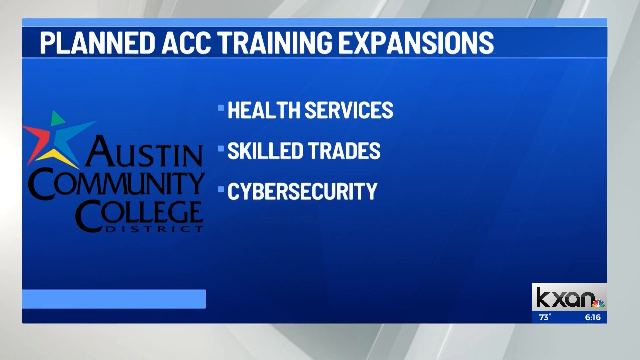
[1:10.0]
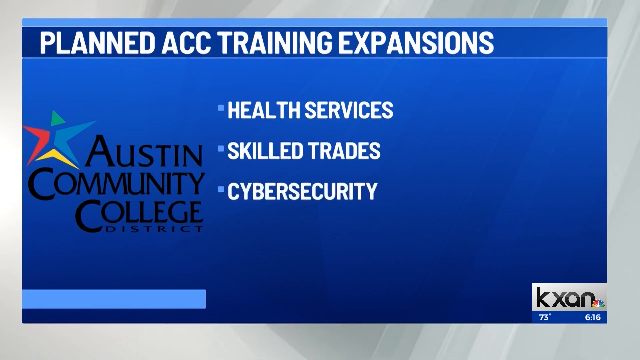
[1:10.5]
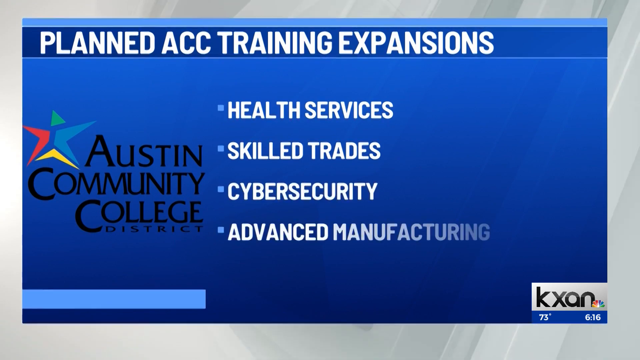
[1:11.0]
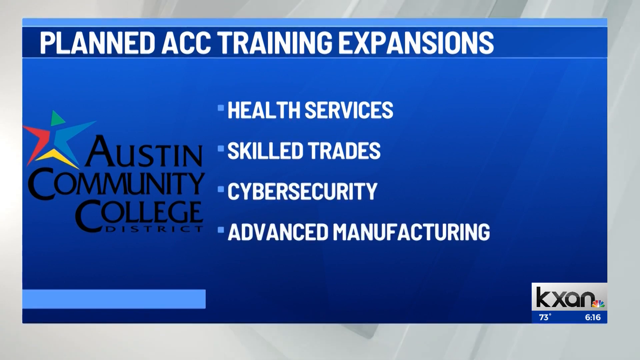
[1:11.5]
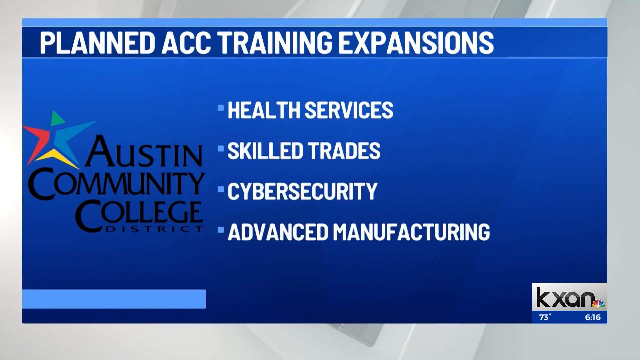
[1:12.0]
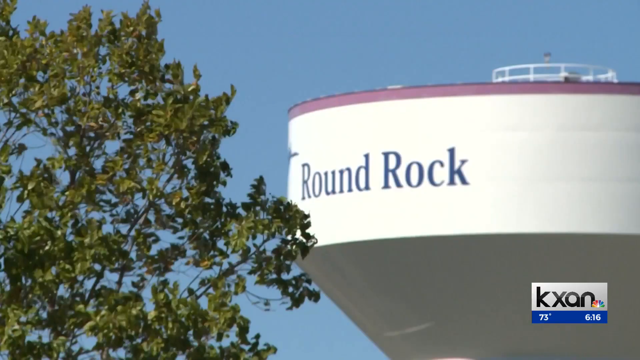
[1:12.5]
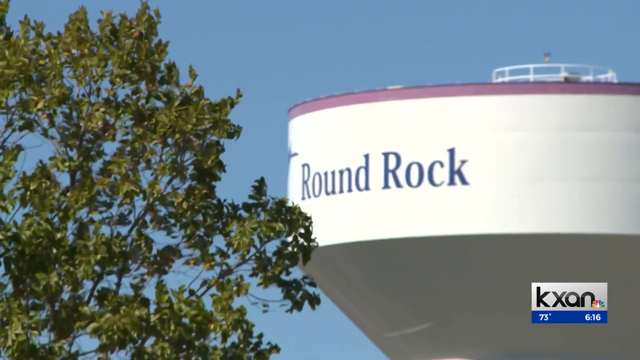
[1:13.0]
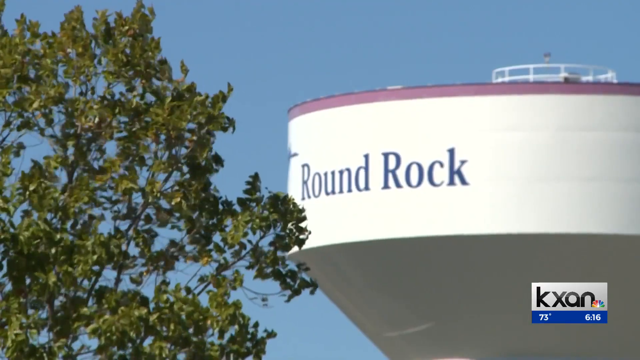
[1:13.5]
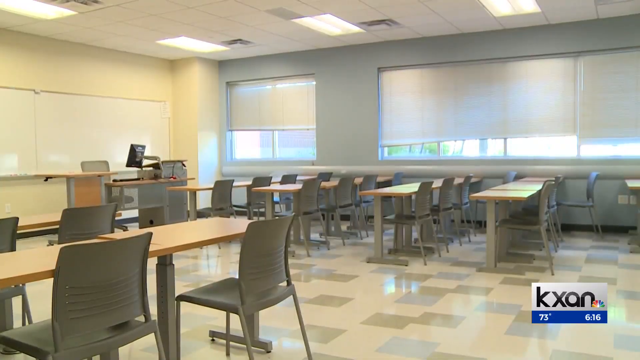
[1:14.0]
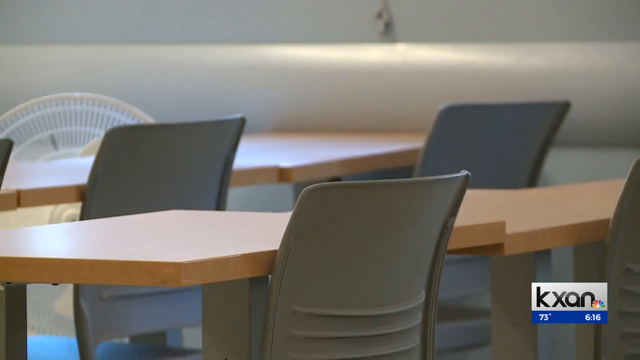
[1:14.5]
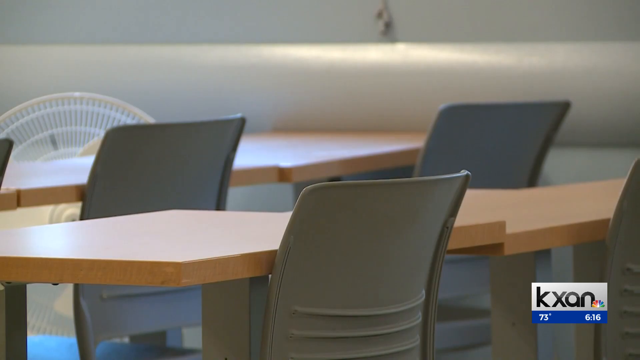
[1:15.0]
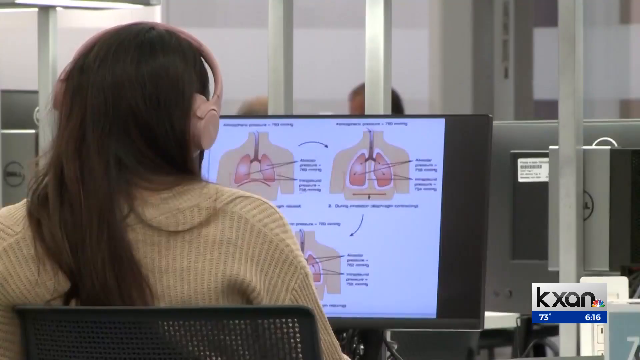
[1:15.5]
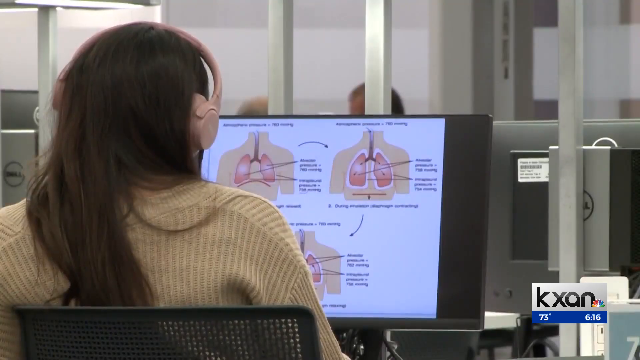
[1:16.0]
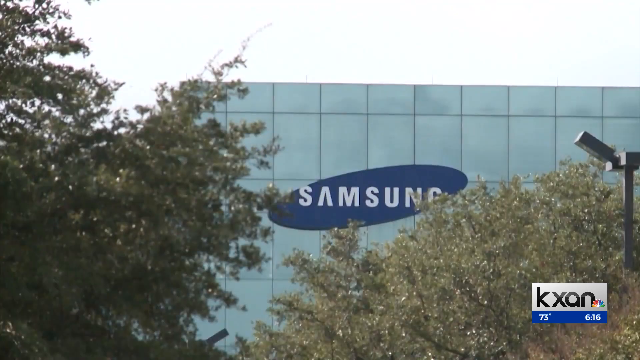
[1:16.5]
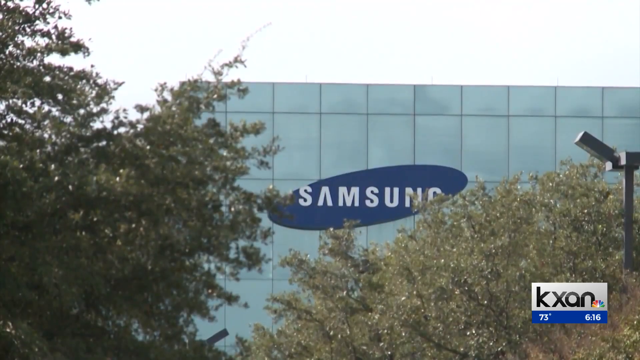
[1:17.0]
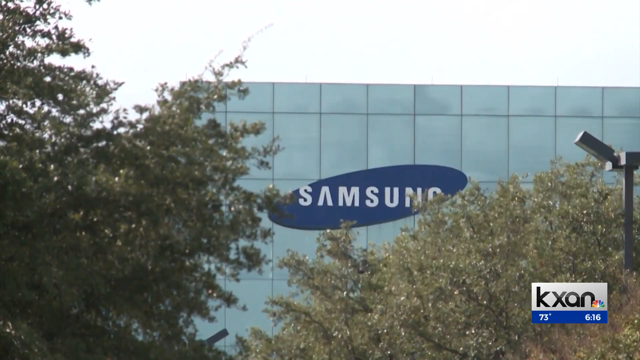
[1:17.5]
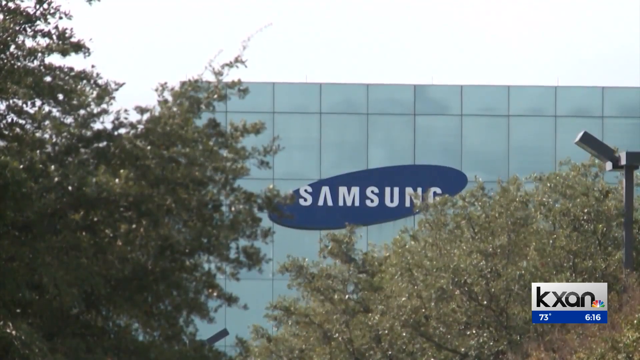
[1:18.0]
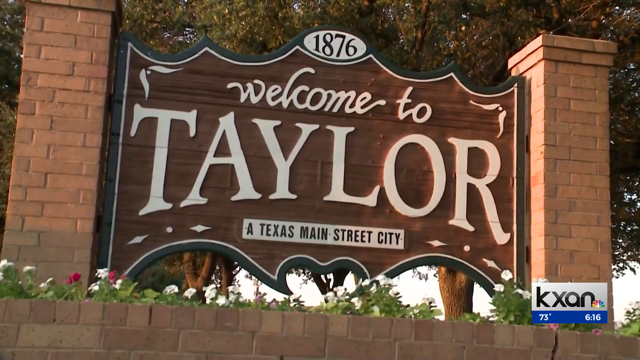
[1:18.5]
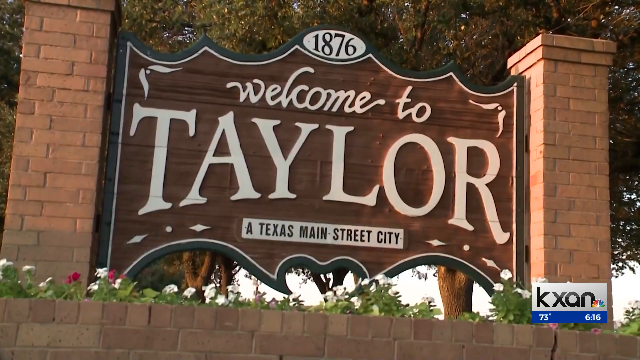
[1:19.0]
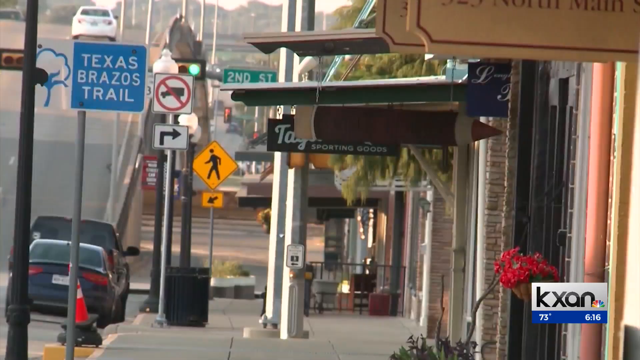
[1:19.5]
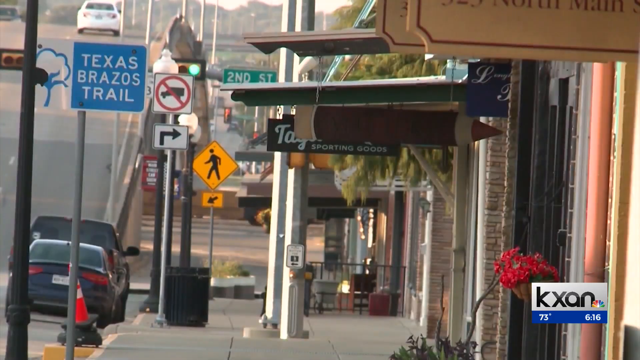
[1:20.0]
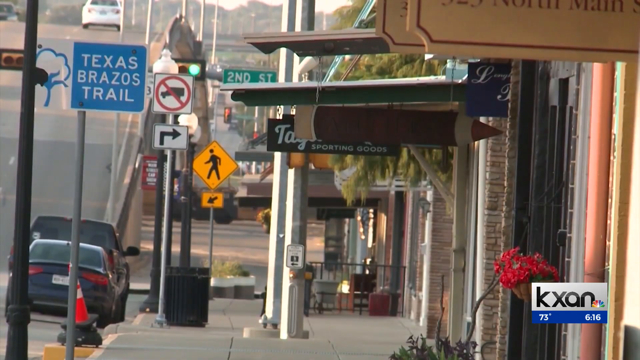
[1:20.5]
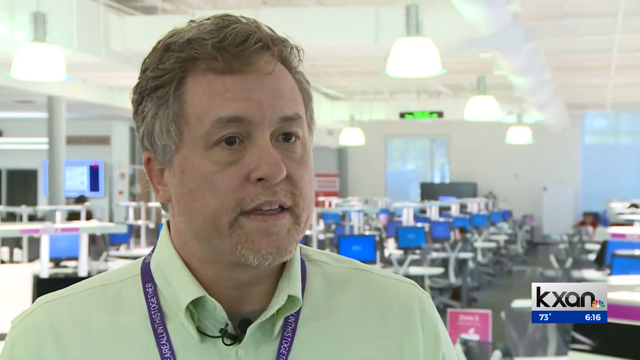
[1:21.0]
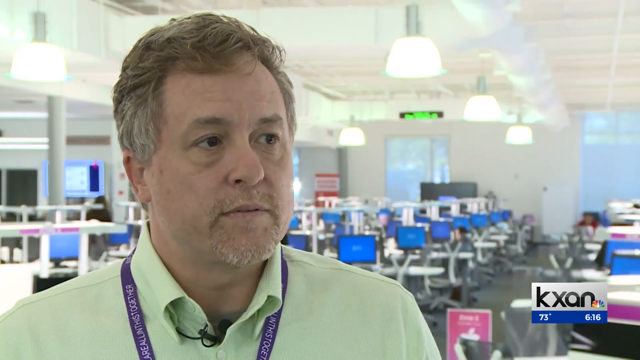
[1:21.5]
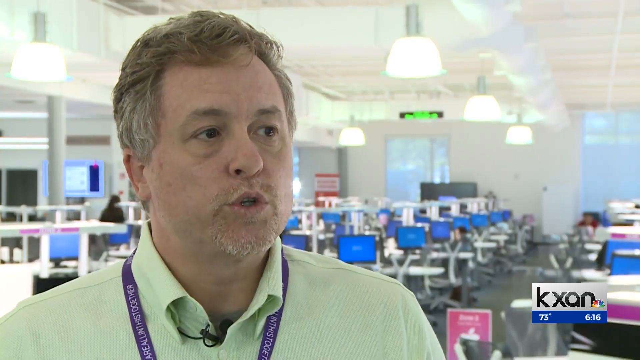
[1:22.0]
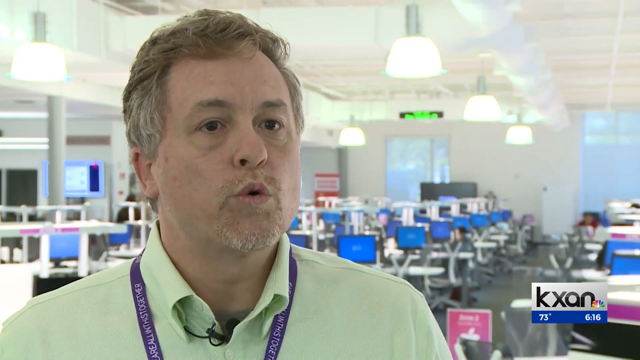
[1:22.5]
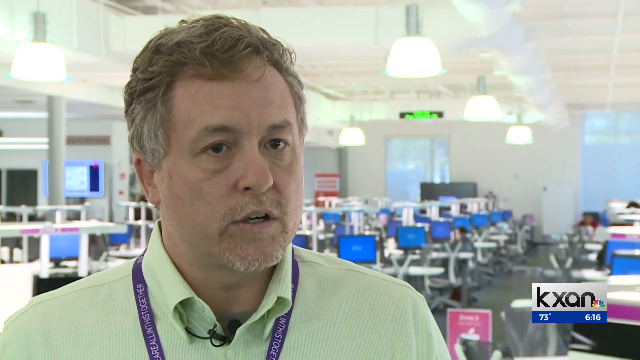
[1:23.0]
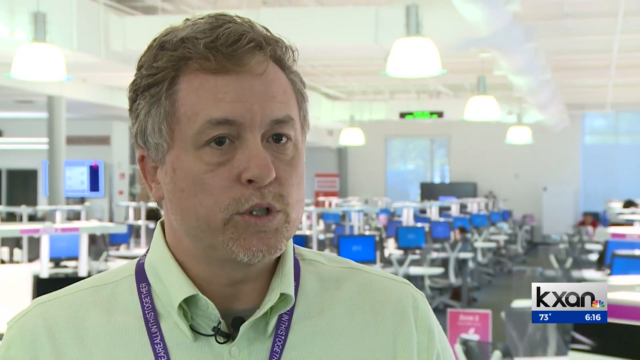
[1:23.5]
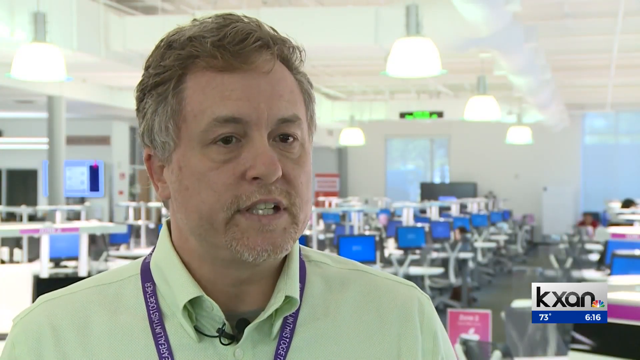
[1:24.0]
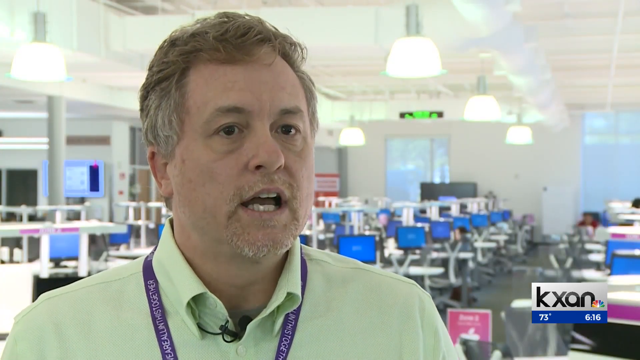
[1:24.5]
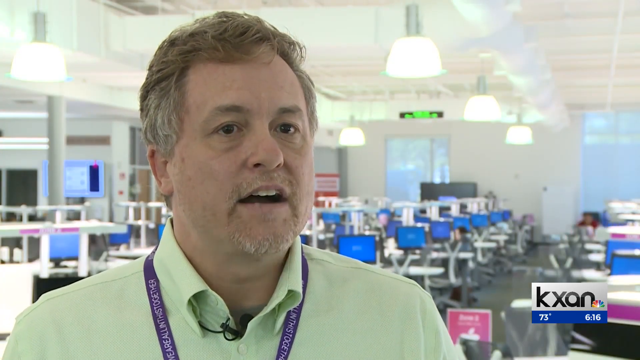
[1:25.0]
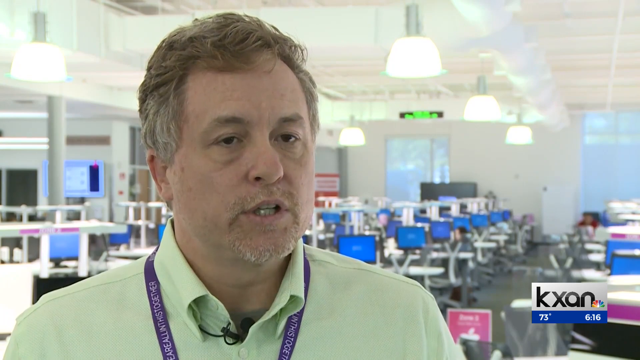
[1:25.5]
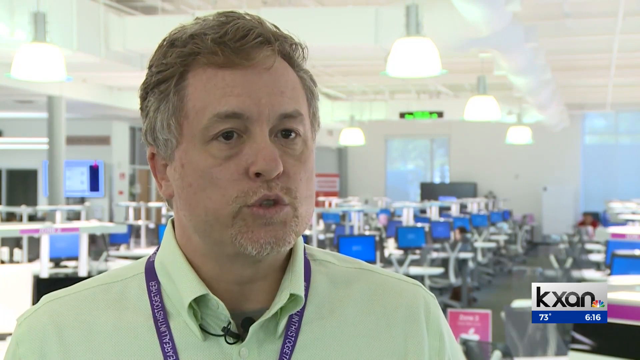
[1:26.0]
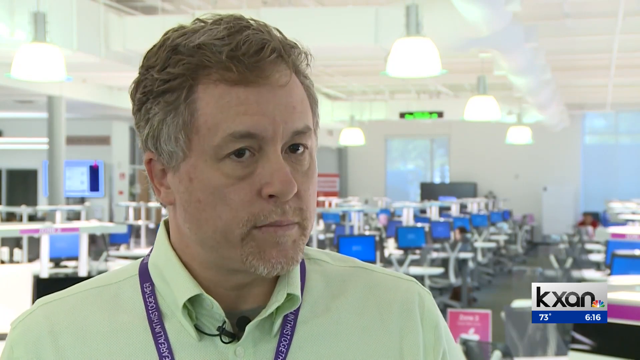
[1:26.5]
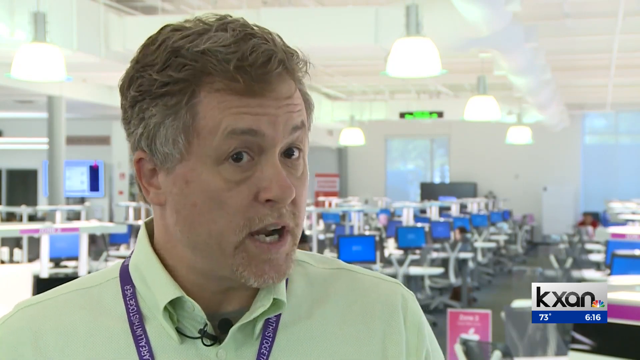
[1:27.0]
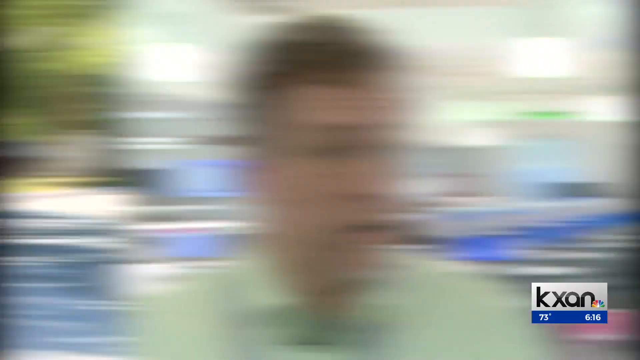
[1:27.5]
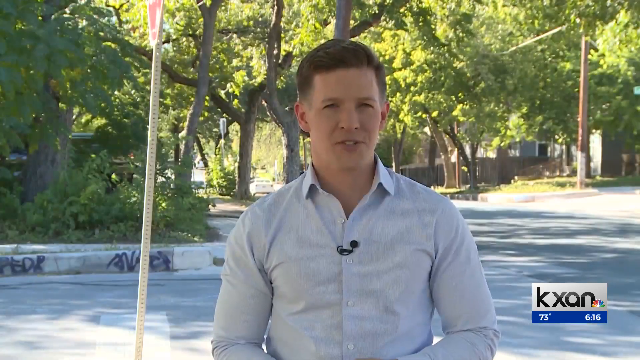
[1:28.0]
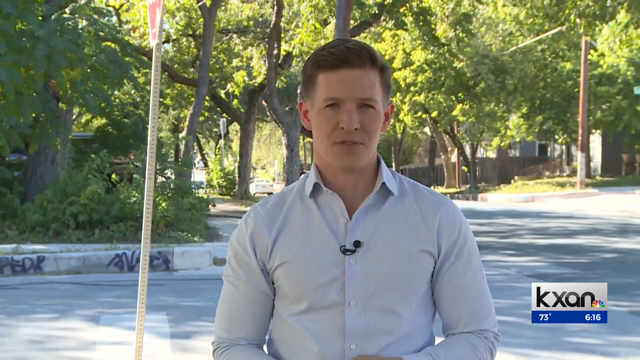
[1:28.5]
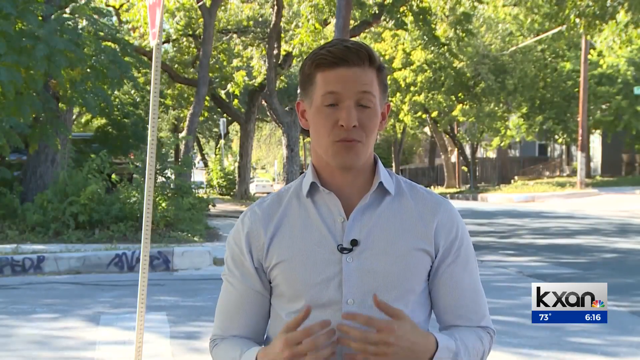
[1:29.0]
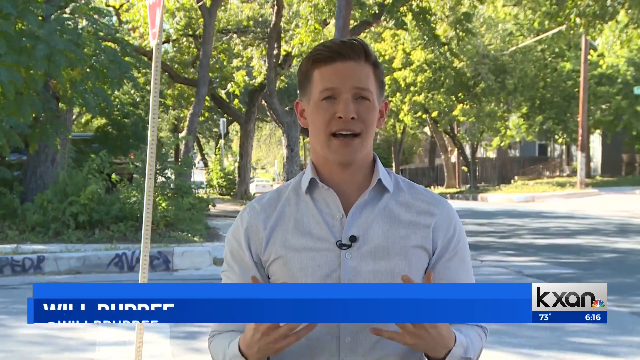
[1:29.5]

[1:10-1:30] The scene begins outdoors on a clear day with blue skies. A tight shot, looking up toward the sky, shows a white water tower with red trim at the top and the words "Round Rock" on it in blue. To the left is the top of a tree. At the bottom of the frame are the call letters KXAN with the peacock symbol, the temperature of 73 degrees, and the time, 6:16 p.m. It is windy, and the trees are blowing. Several scenes follow. The first is an empty, well-lit indoor classroom with some exterior windows and lots of desks, one of them in front of the professor's desk. The classroom looks not as modern and has laminate flooring. Next is a close-up of a set of chairs and tables in the classroom. Then the view is from behind a student wearing earphones who is looking at a computer showing a graphical presentation of the upper body, including the lungs. Next, outdoors, a tight shot from the ground looks up to the top of a glass Samsung building with glass windows; the tops of trees and outside lighting are visible, and the Samsung logo is a blue disc with the word Samsung across it. Then a town entry sign between two brick columns reads "1876" at the top, "Welcome to Taylor," and underneath, "a Texas Main Street city." A street scene follows, looking down one street, with the words "Texas Brazos Trail" and a street sign reading "Second Street." Next is the professor in a room, then a reporter, William Dupree, outdoors.